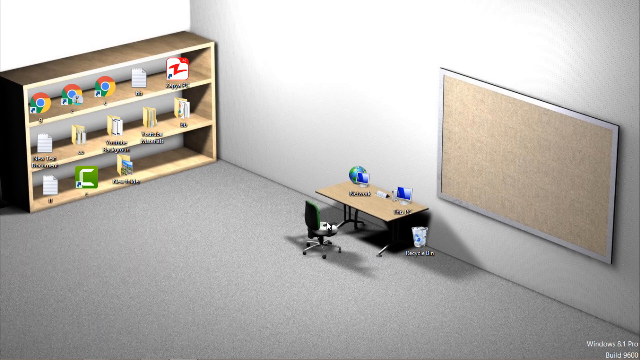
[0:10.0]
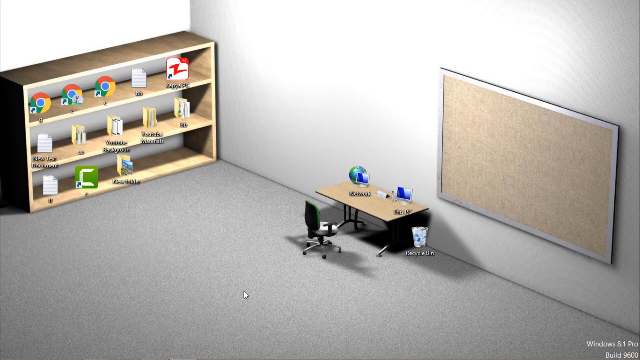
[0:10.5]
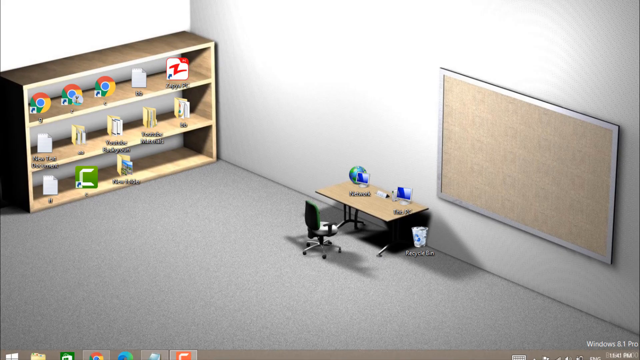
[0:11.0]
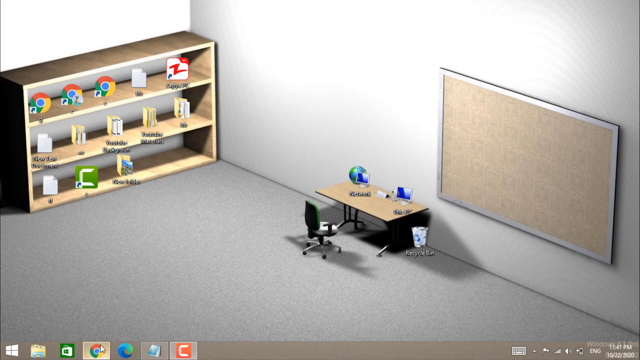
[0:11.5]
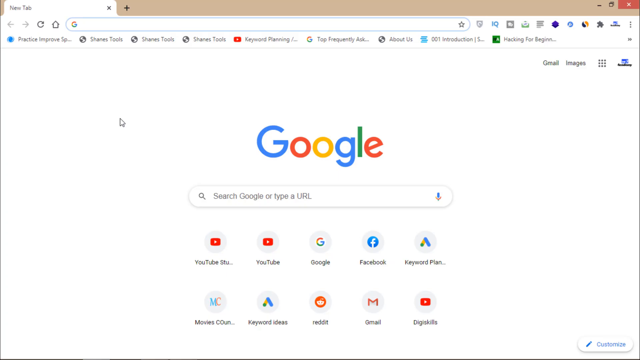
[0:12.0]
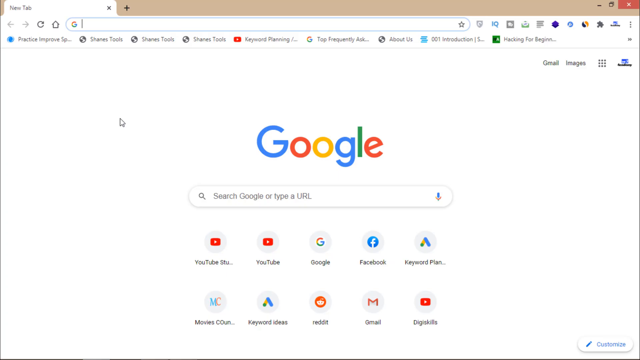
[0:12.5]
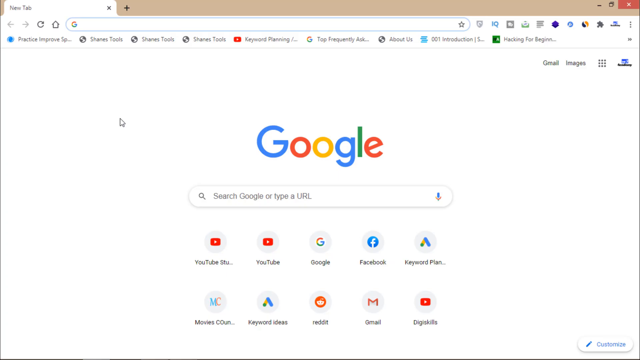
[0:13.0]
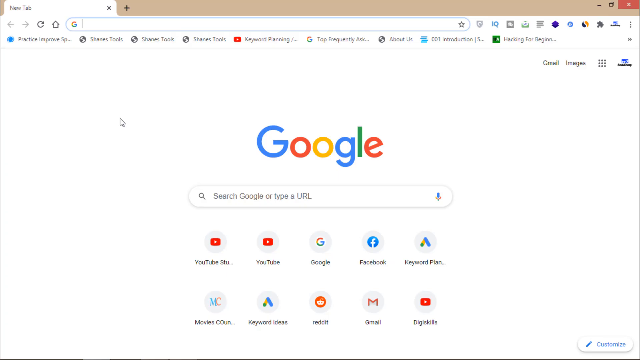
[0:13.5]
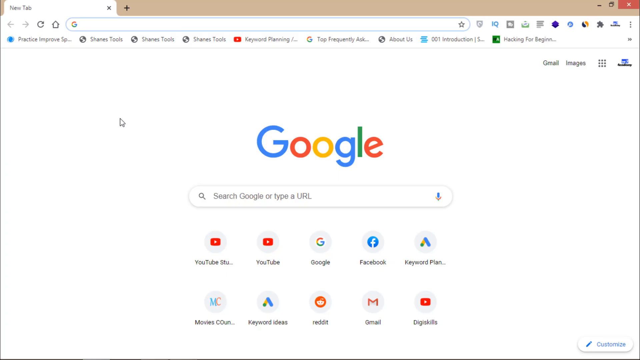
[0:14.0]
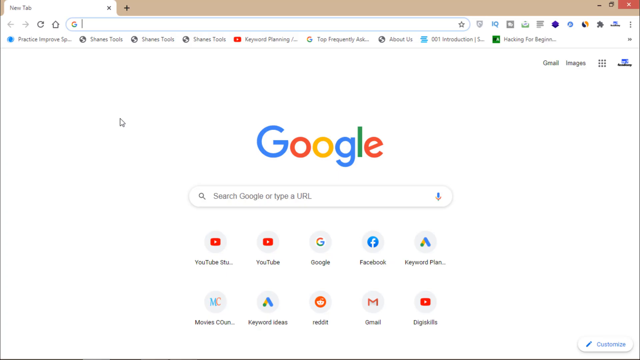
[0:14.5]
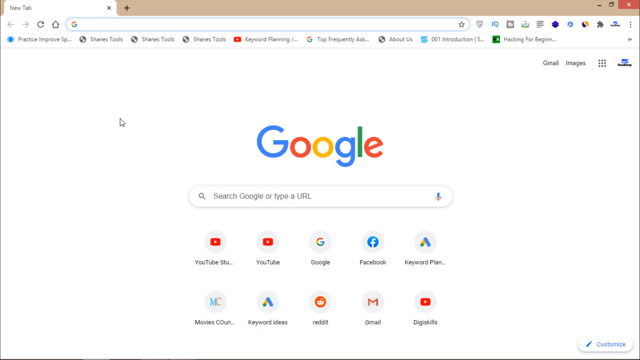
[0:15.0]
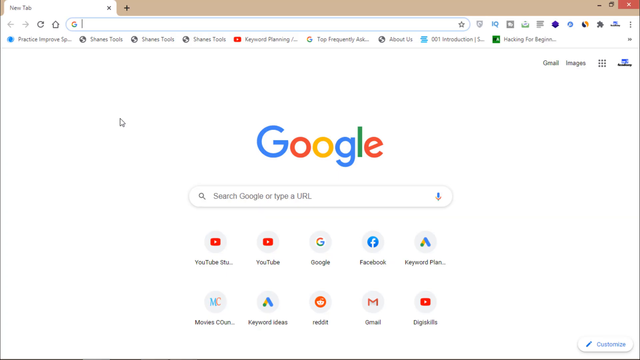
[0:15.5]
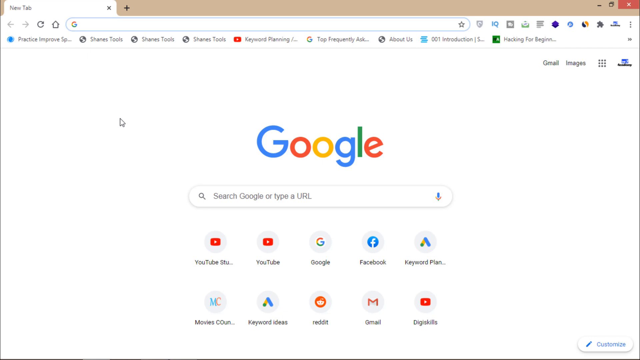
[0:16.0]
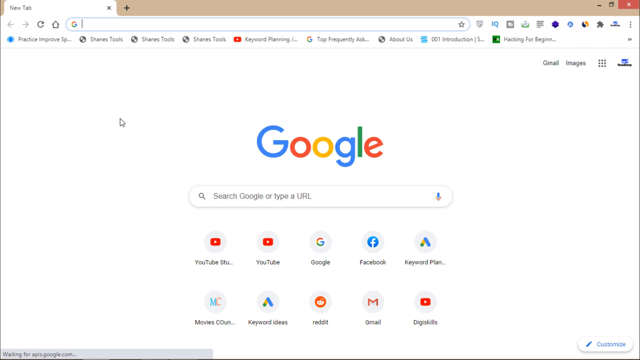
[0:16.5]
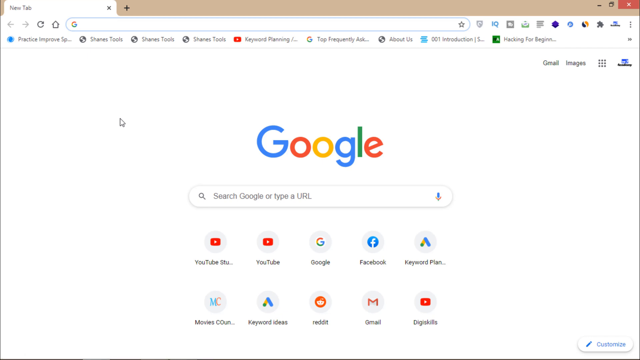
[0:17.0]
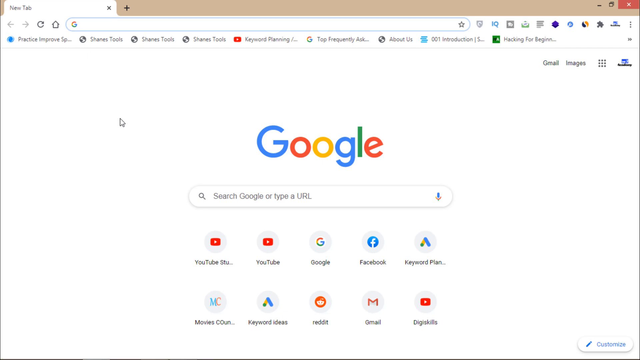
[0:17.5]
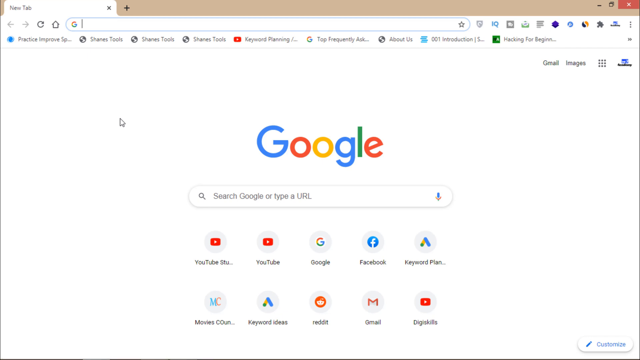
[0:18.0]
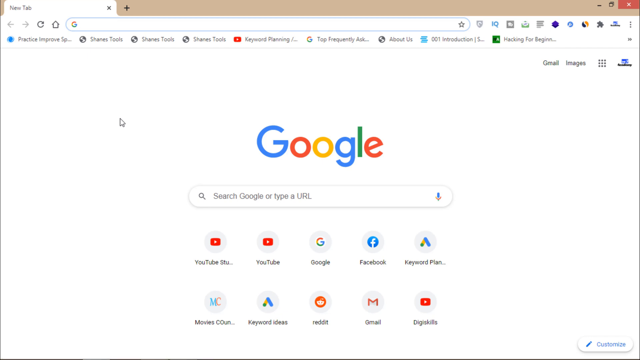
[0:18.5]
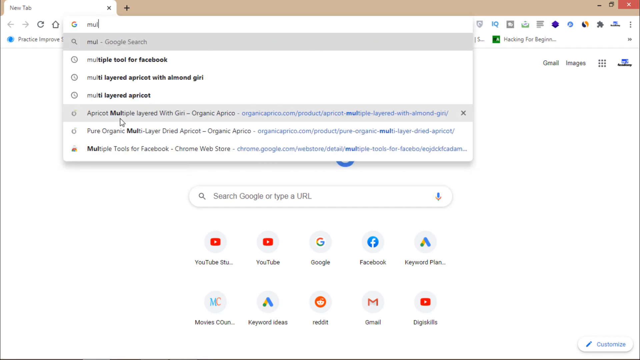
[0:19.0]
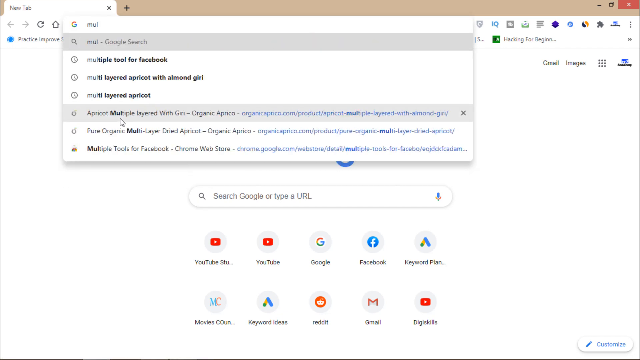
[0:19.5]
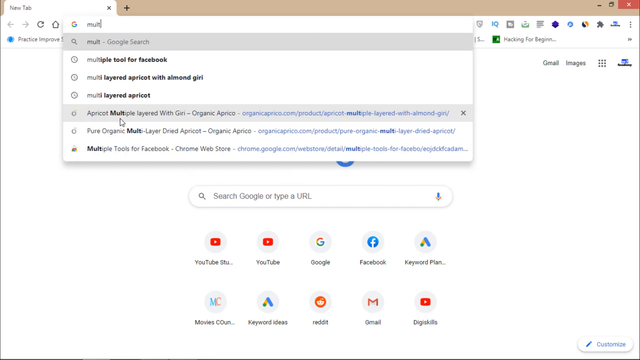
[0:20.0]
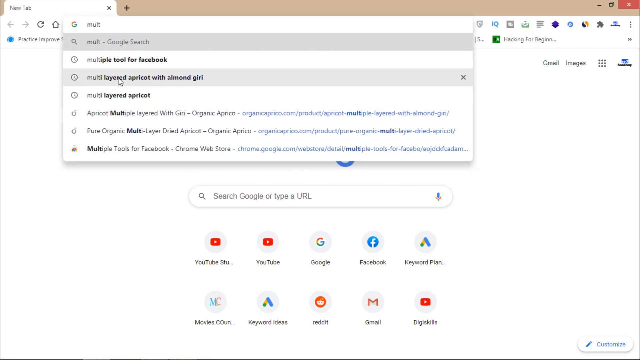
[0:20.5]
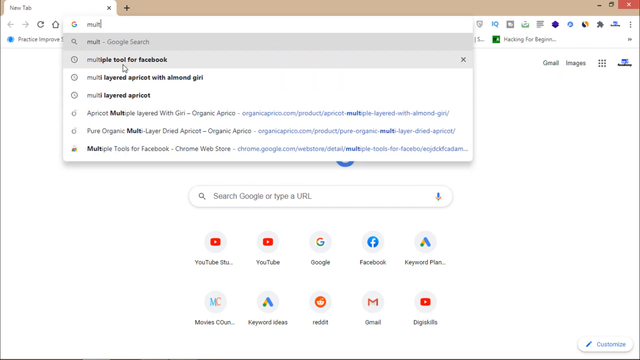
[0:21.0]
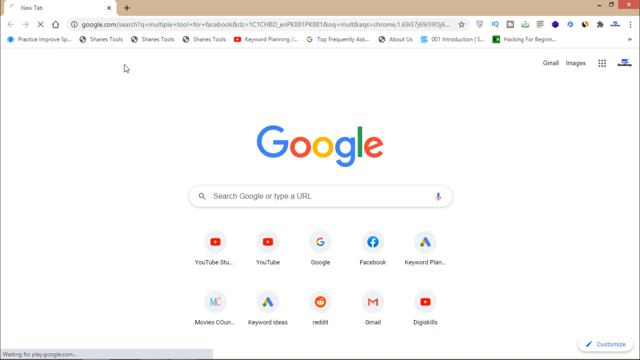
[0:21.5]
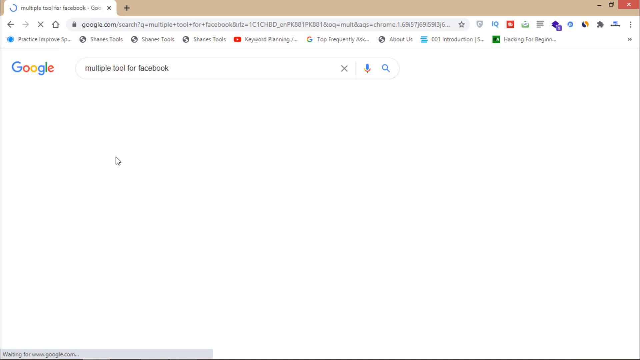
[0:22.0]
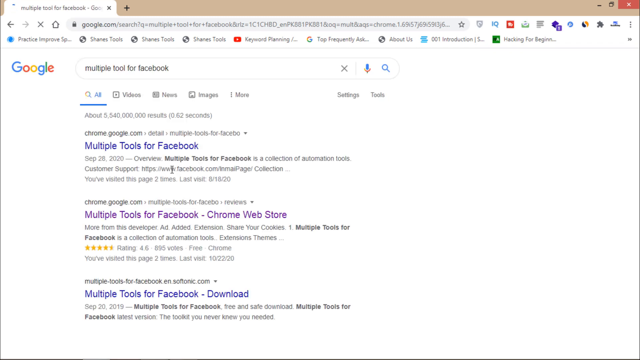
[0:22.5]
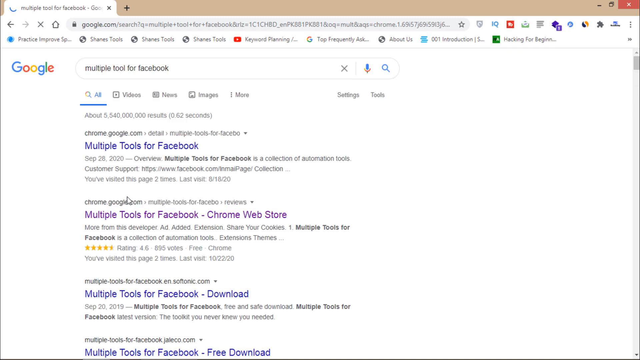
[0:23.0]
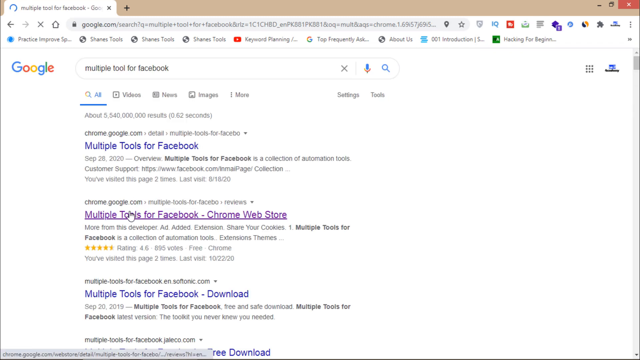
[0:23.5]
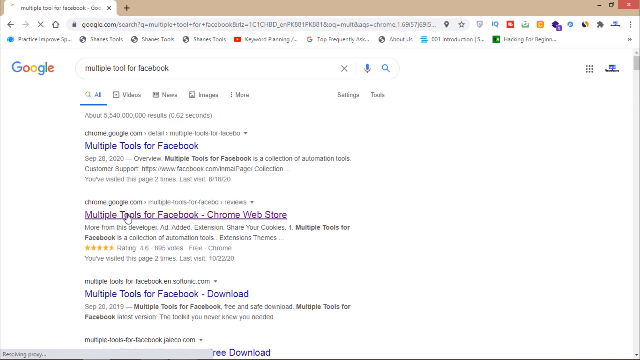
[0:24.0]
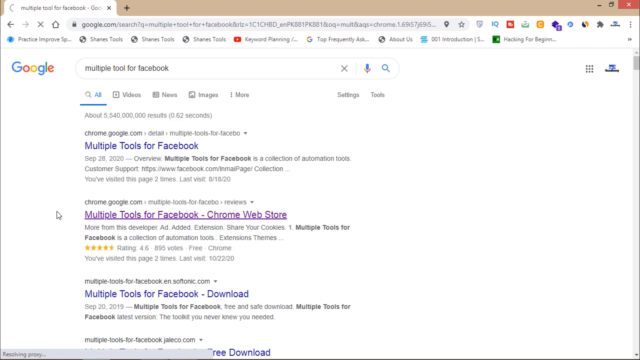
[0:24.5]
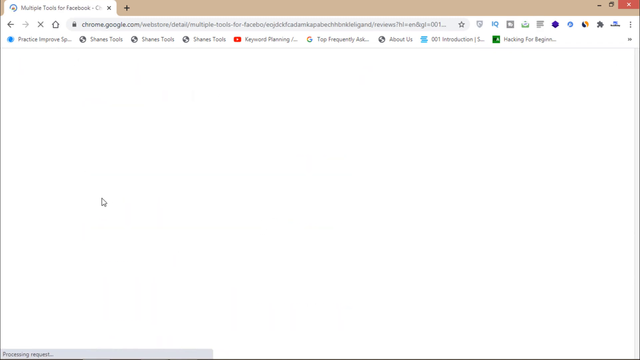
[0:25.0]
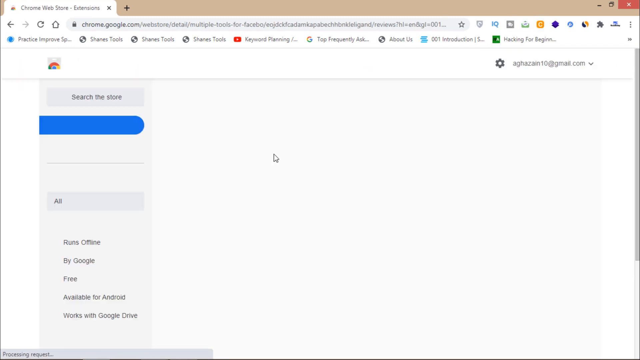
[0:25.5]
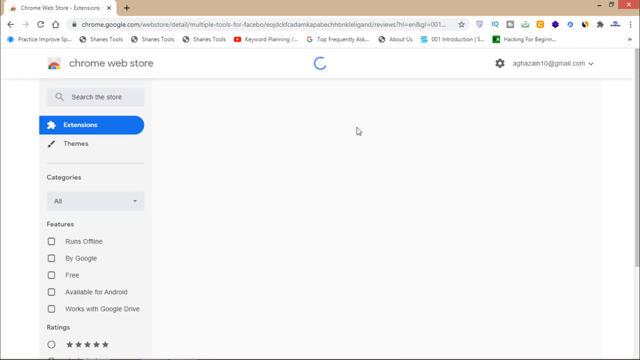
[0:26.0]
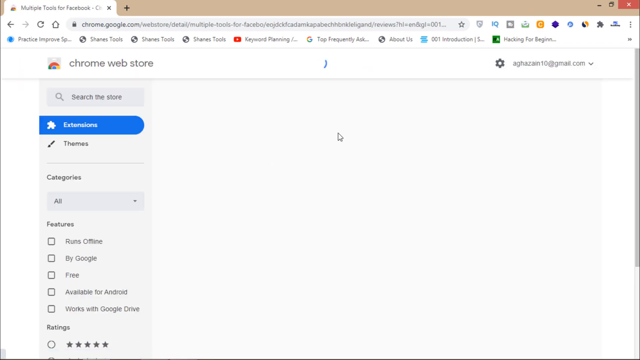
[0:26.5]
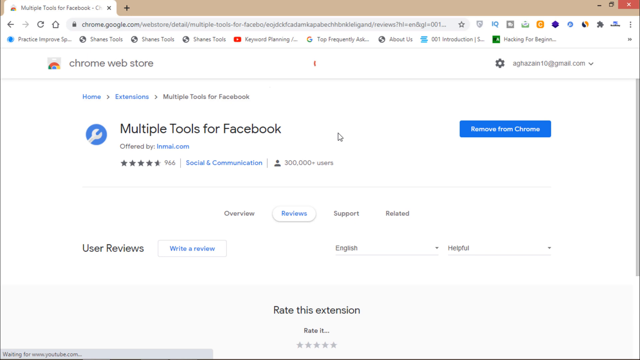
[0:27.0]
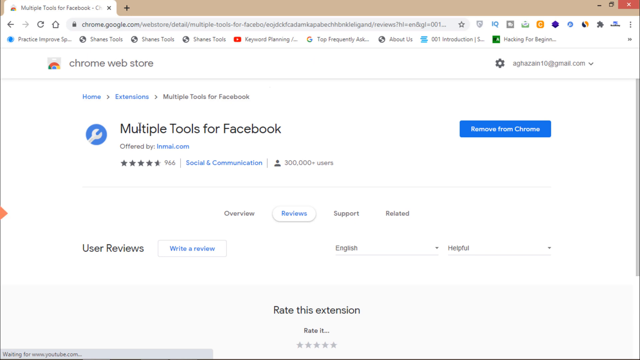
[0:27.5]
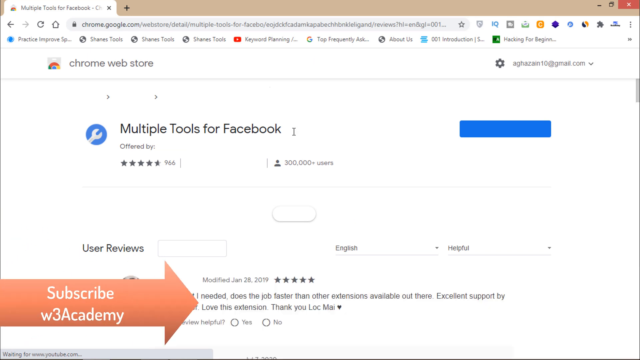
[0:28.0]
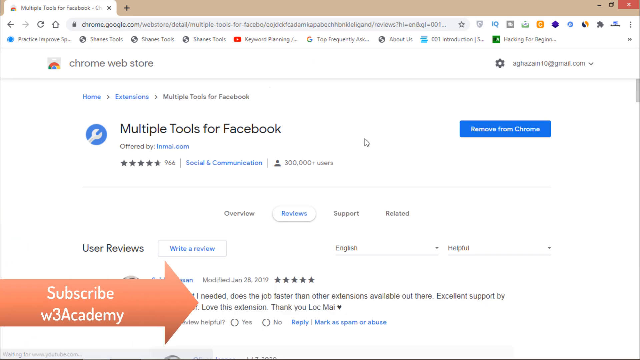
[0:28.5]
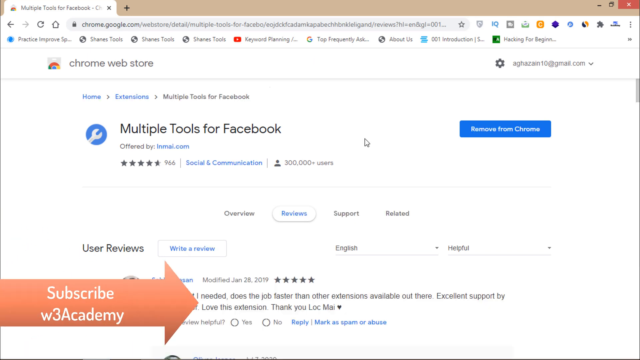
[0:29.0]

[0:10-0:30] The animated room, some type of classroom or office, shows a desk against the wall, a little earth globe icon, two monitors, a recycle bin on the ground used as a trash can, a green and white chair, and a big bulletin board. A shelf holds icons, including three Google Chrome icons, and a lot of documents. The view then changes to a Google page, where it looks like someone is about to type something; the page also shows YouTube, YouTube, Google, Facebook, Reddit and Gmail. "Multiple tool for Facebook" is typed in, and a link reading "multiple tools for Facebook Chrome Web Store" is clicked. The Chrome Web Store page opens, and it looks like the extension is already installed, since it says "removed from Chrome."